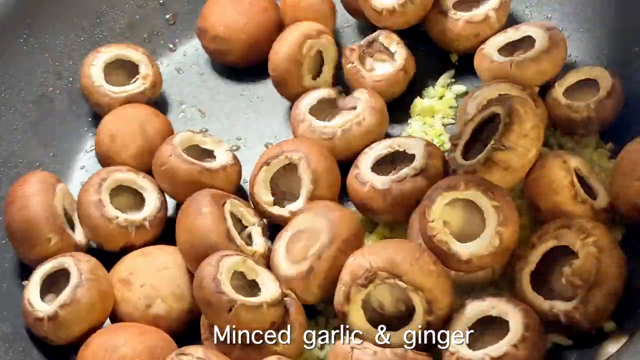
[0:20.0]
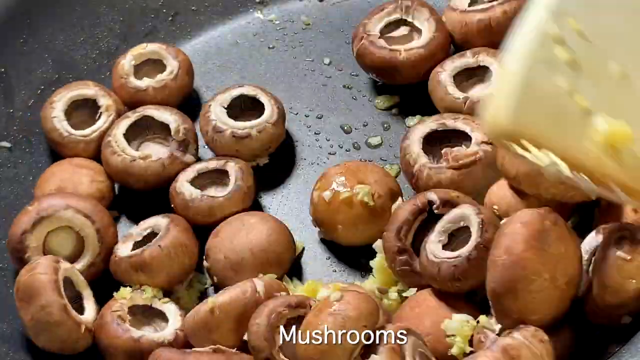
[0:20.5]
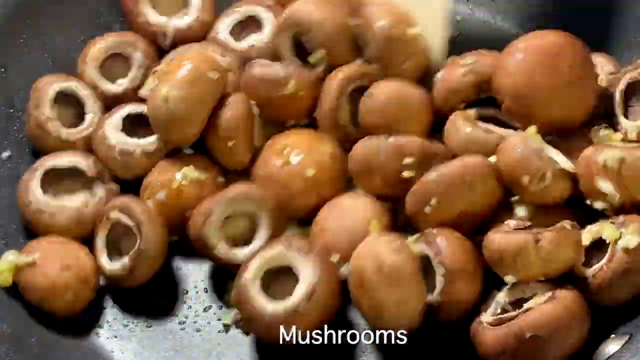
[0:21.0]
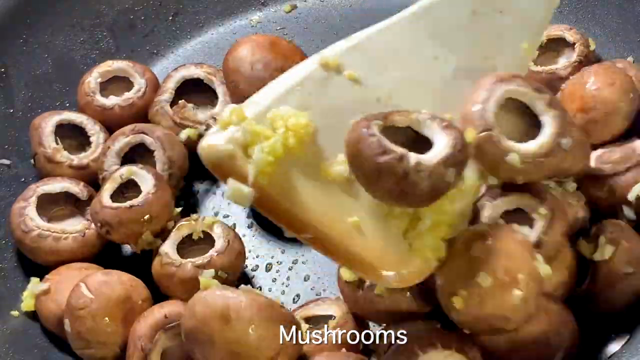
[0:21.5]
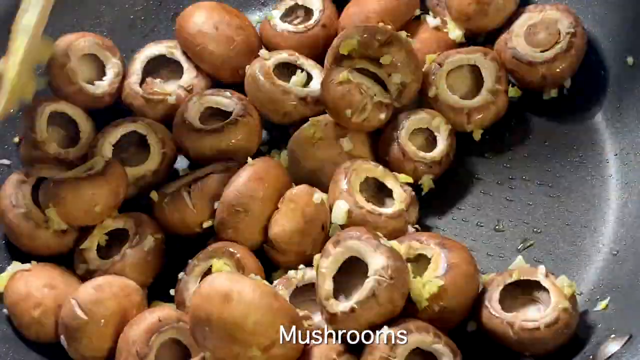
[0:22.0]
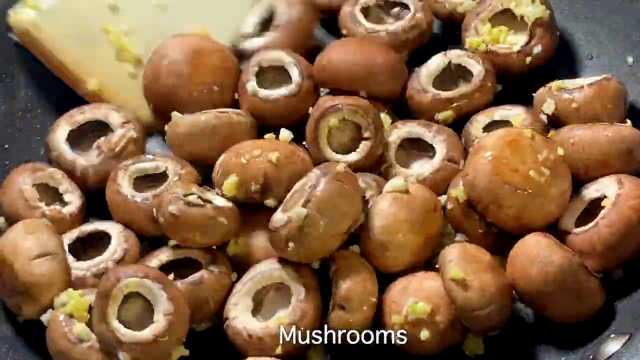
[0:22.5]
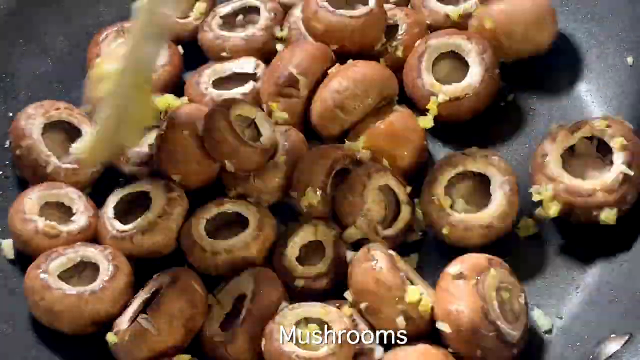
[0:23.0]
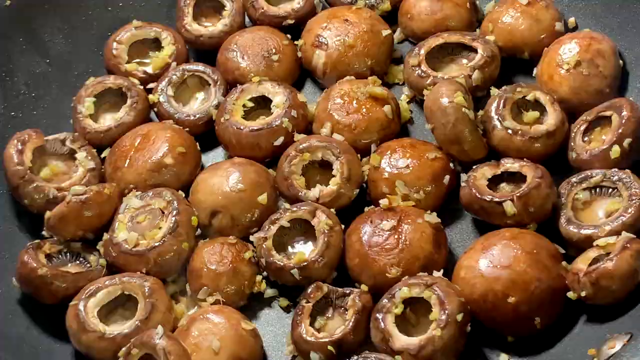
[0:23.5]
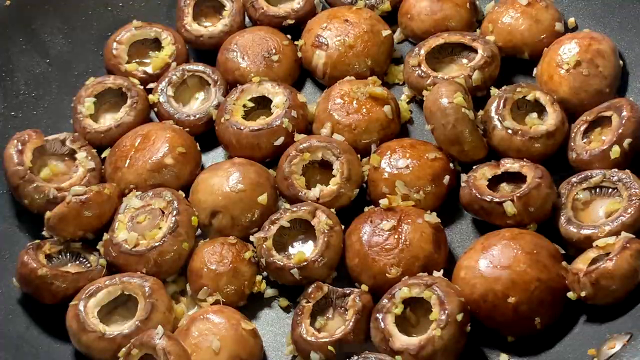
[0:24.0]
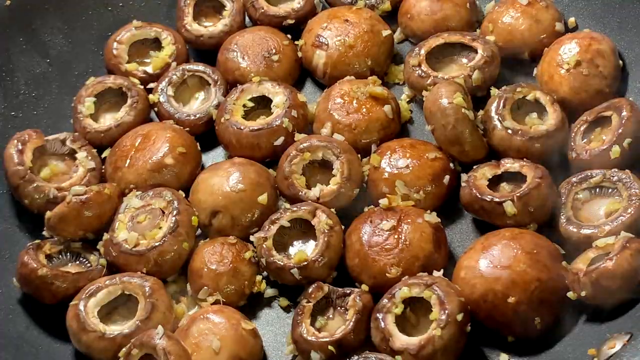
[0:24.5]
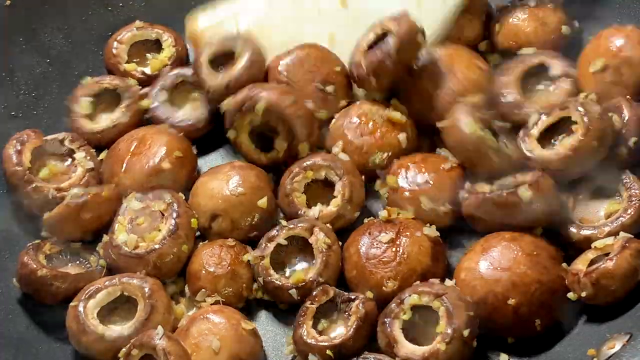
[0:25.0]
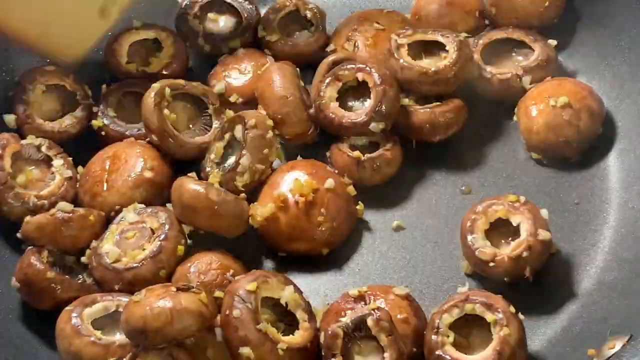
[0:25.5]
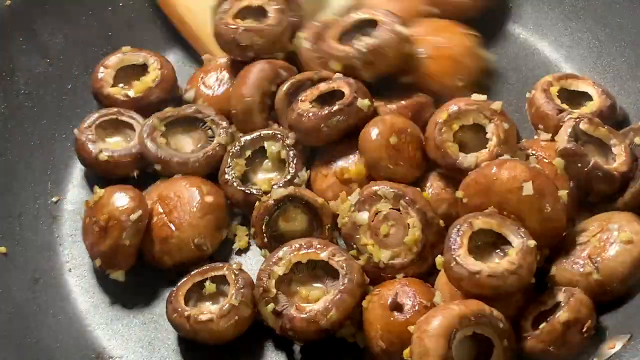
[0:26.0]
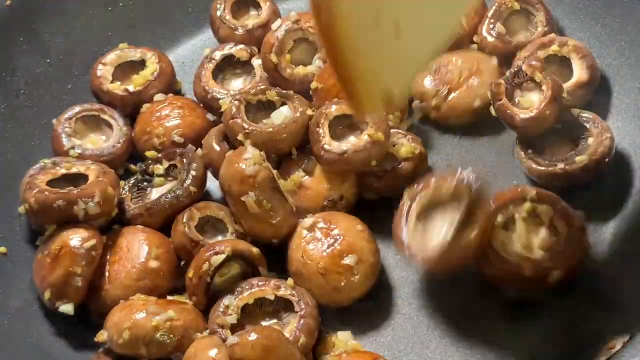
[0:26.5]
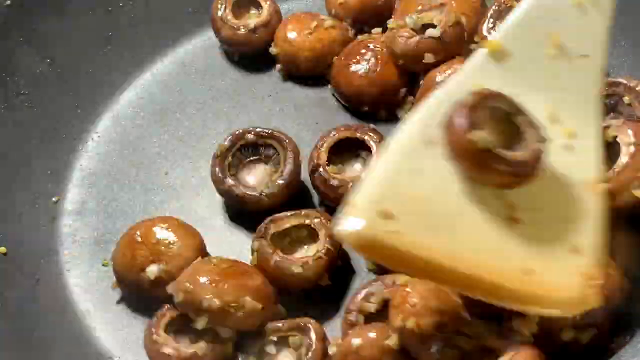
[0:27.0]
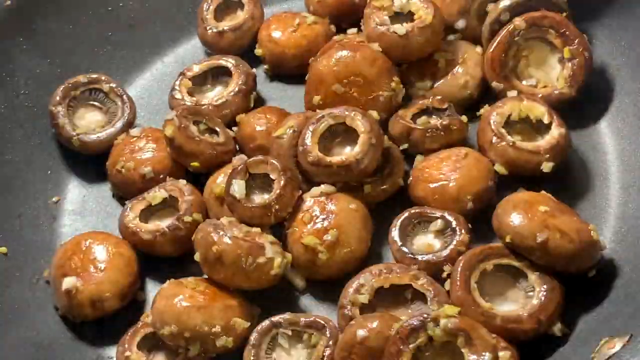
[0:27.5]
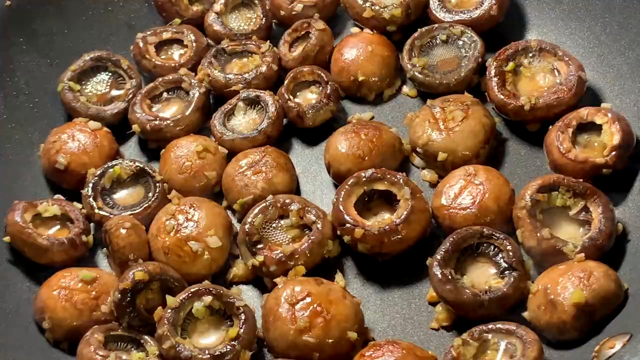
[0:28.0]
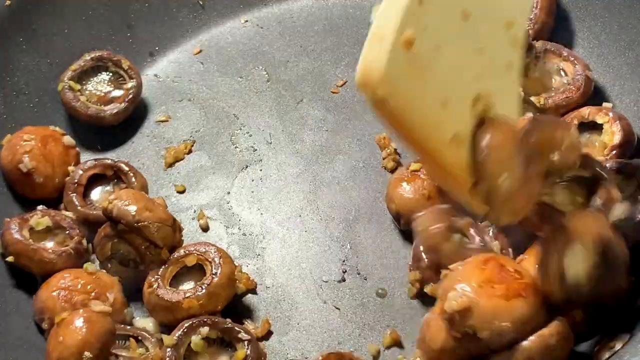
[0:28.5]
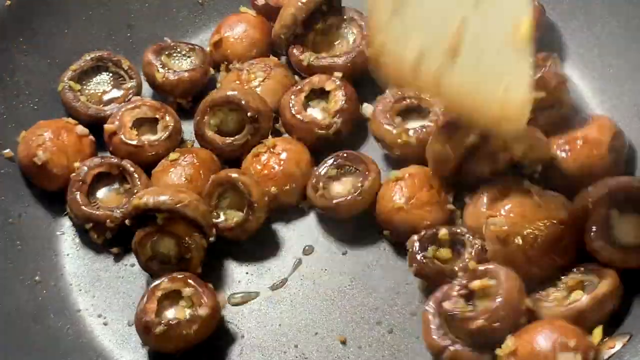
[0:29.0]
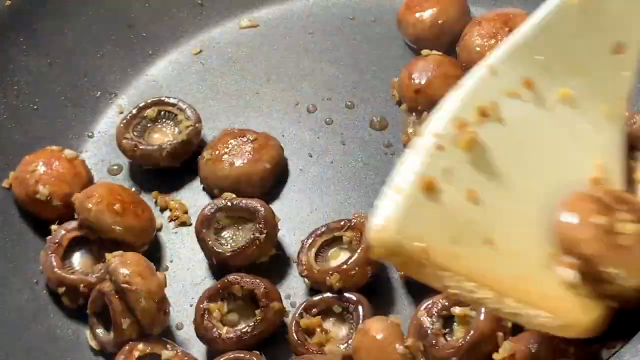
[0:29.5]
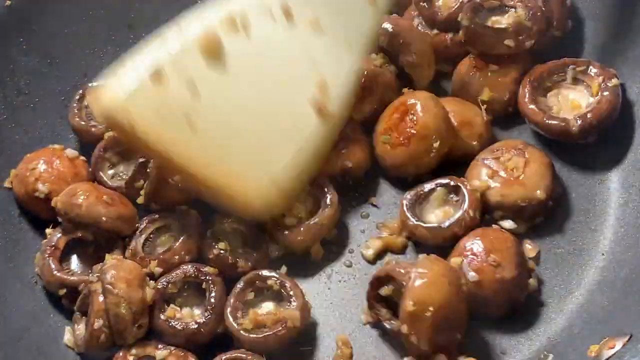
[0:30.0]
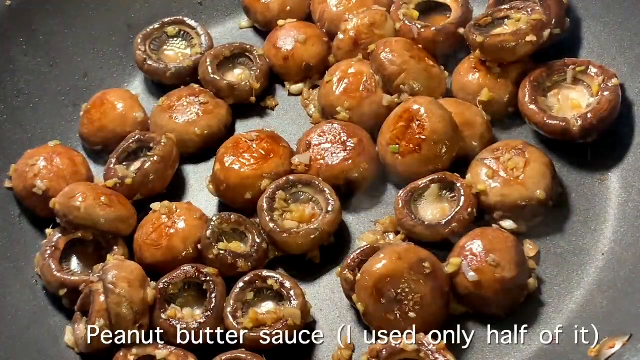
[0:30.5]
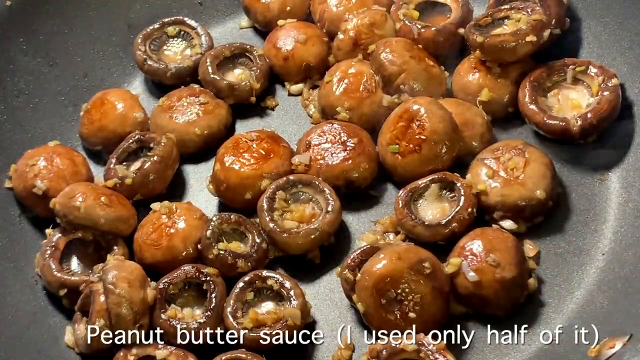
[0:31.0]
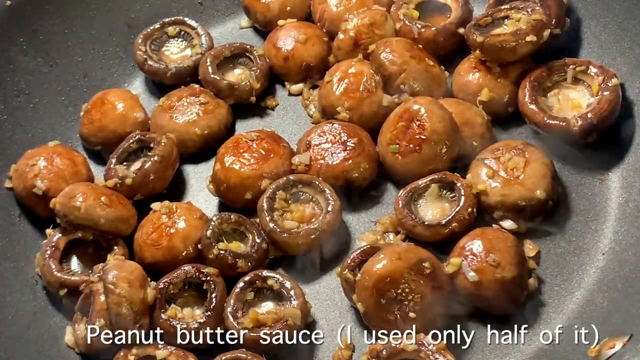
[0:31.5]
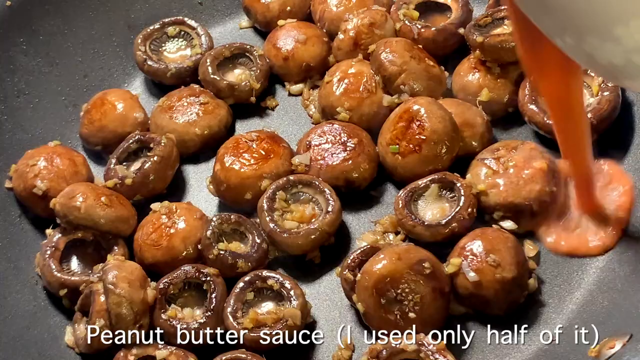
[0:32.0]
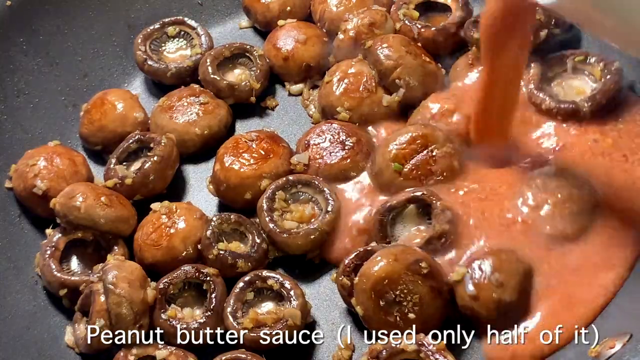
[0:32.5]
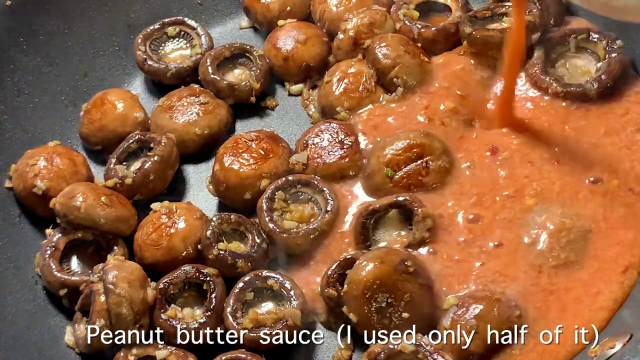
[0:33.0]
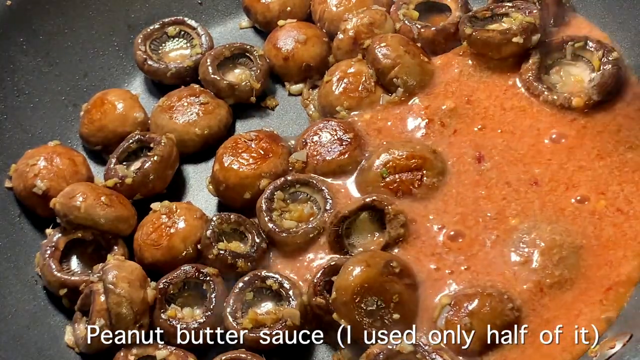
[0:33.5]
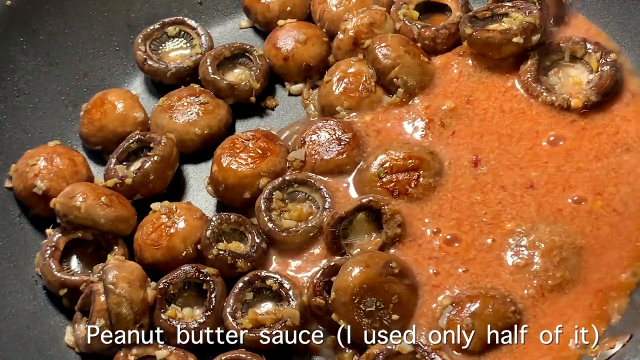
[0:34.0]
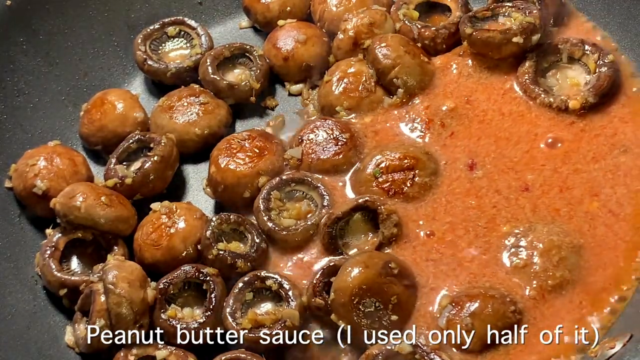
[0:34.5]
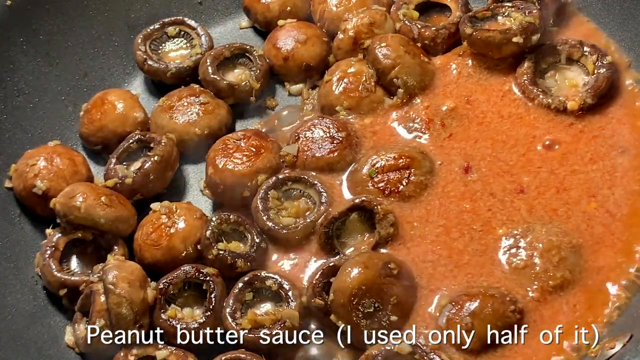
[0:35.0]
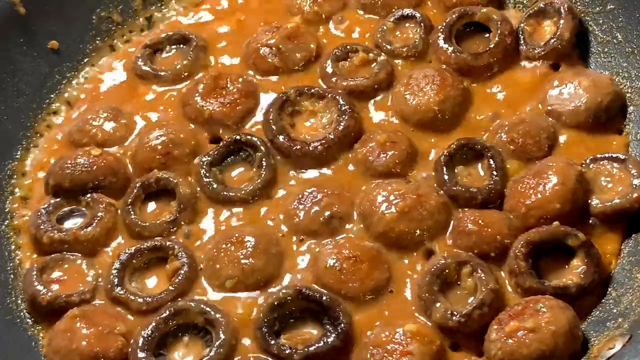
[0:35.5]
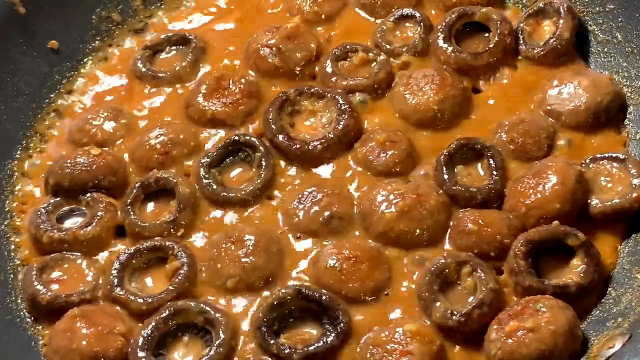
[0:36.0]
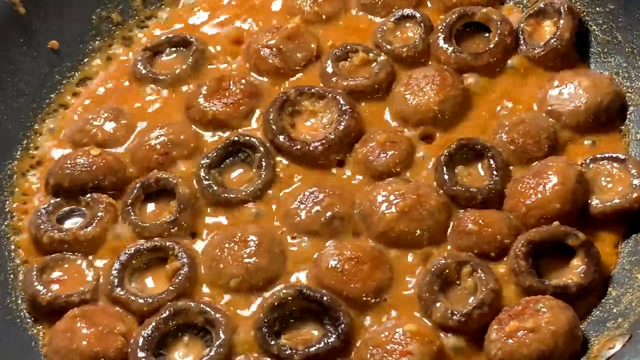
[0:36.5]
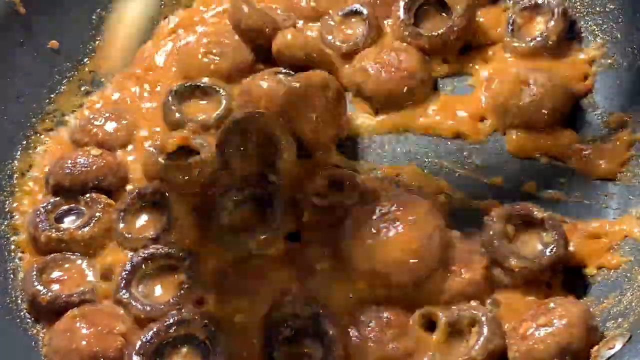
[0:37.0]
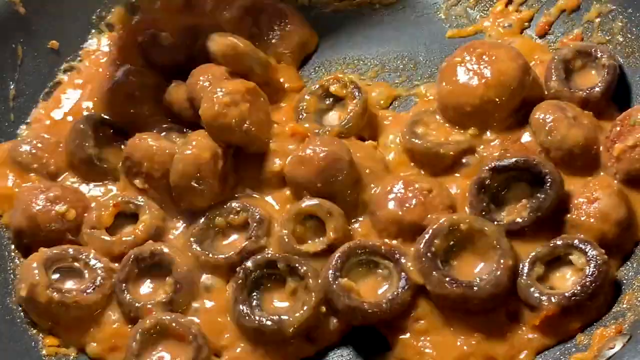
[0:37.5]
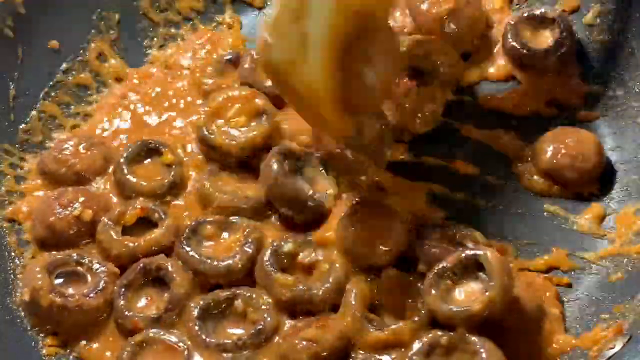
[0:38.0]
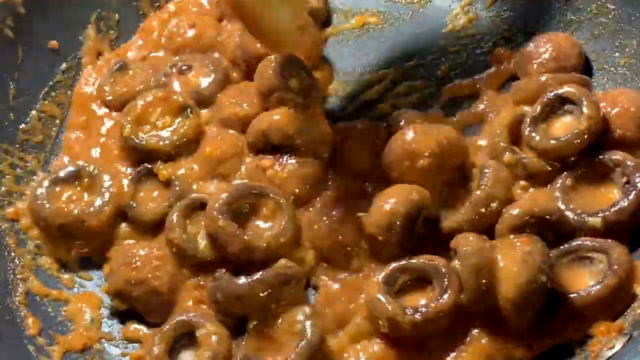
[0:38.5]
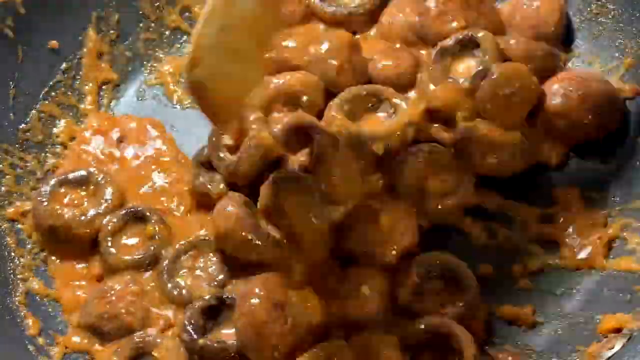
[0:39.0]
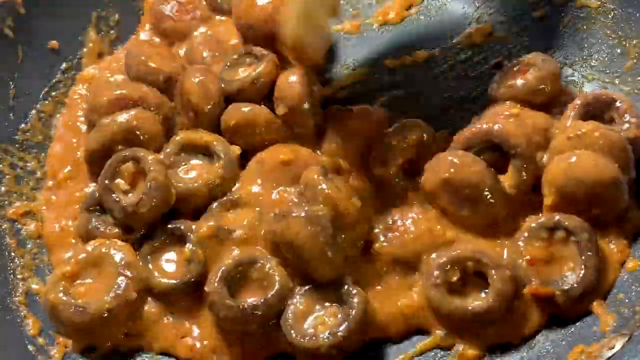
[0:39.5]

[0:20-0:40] Someone is preparing a dish, shown in a close-up of a frying pan that appears to contain oil, minced garlic and button mushrooms. In sped-up footage, a spatula stirs everything around. After a cut the mushrooms are browned and are stirred a bit more; after another cut they are stirred further and have kind of shriveled, almost done. The video slows down and someone pours in an orange liquid mixture from the right-hand side, which starts to bubble immediately. After another cut, the mushrooms are completely saturated in the liquid and sizzling at a rolling boil, and the spatula mixes it all up again in sped-up footage, apparently to make sure the sauce is fully incorporated around the mushrooms. Text at the bottom of the screen reads "I only used half of it" in parentheses.